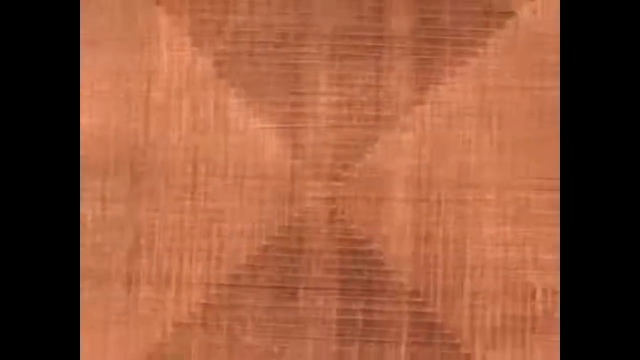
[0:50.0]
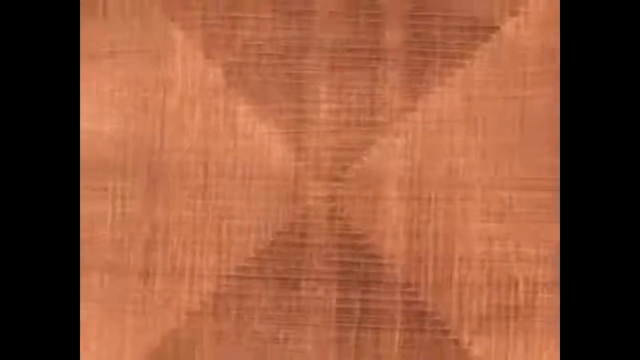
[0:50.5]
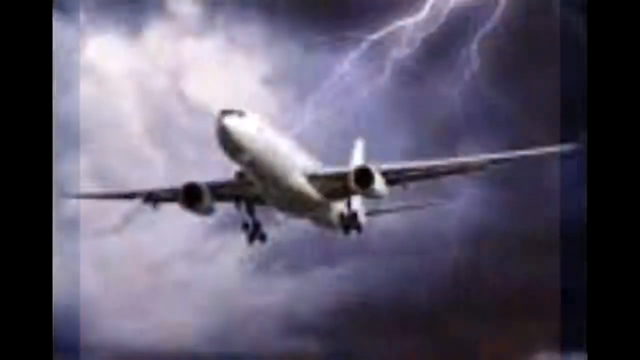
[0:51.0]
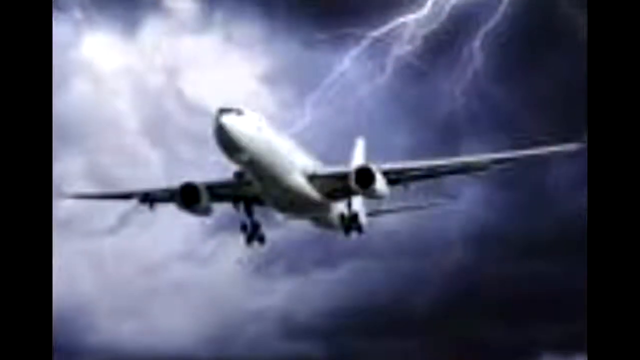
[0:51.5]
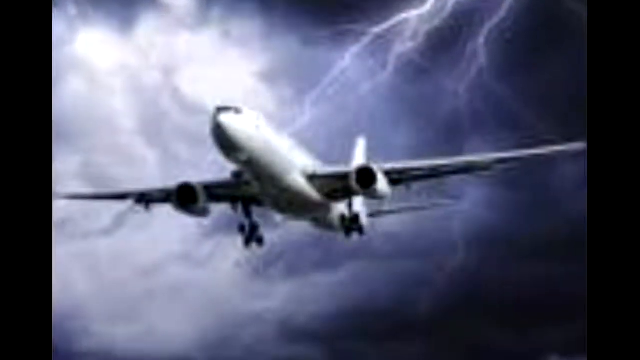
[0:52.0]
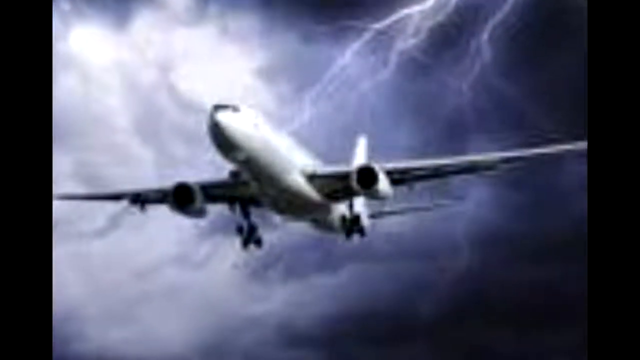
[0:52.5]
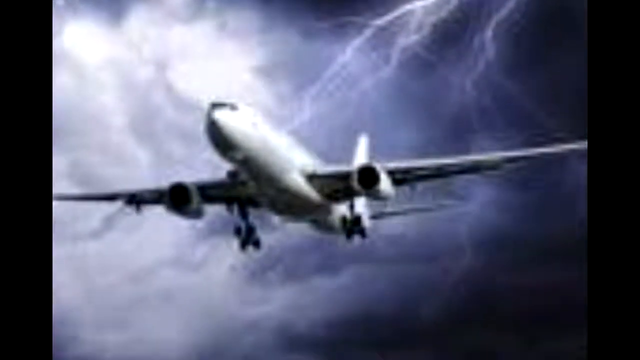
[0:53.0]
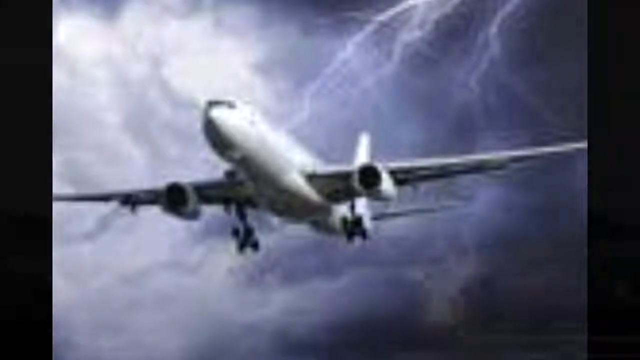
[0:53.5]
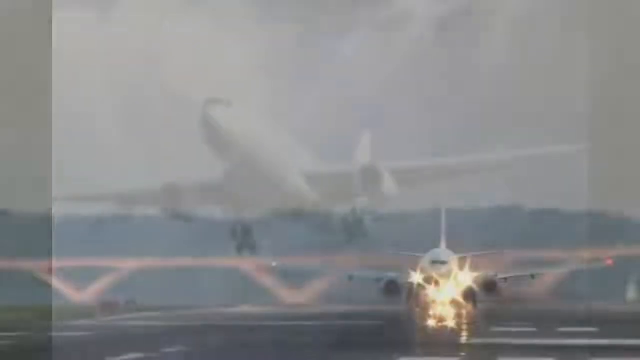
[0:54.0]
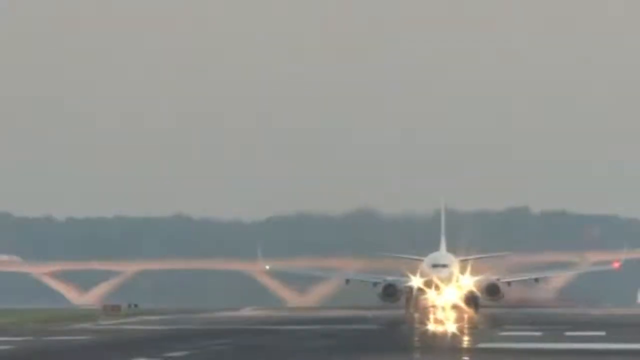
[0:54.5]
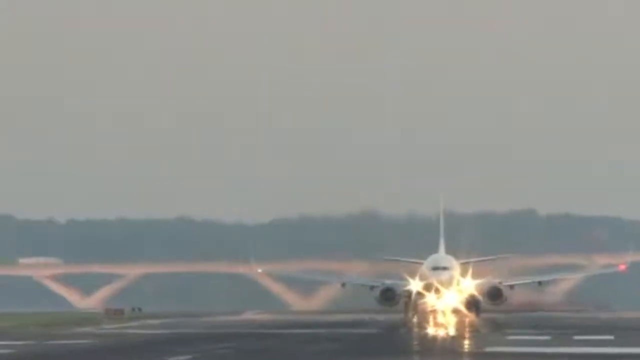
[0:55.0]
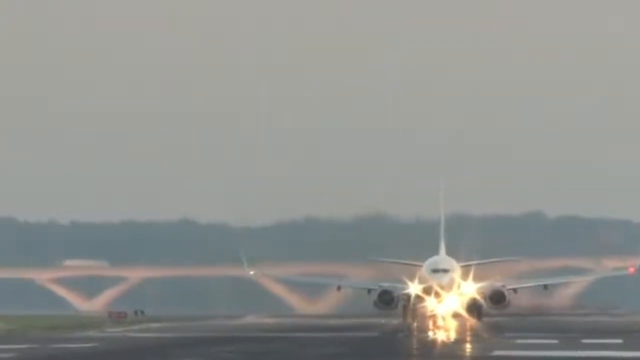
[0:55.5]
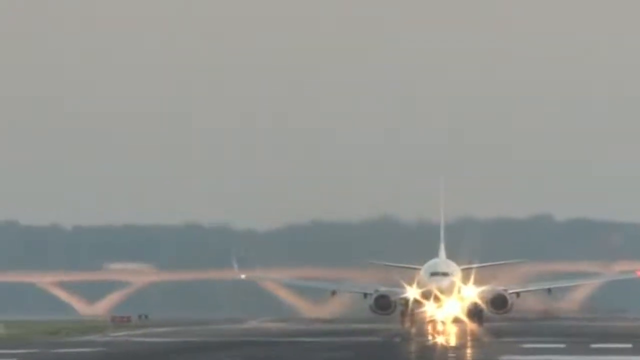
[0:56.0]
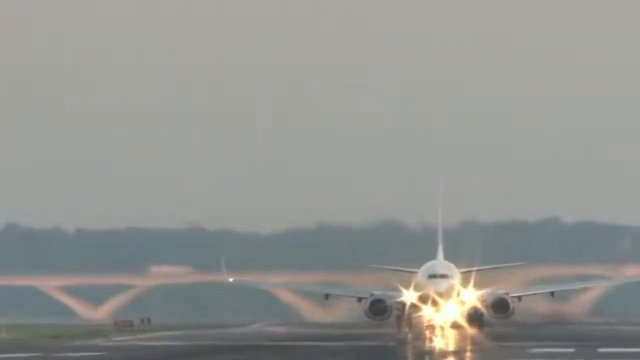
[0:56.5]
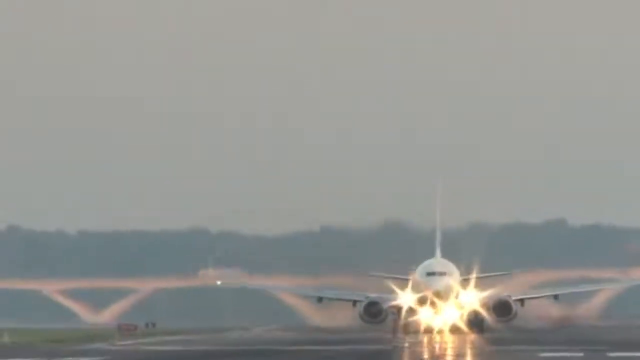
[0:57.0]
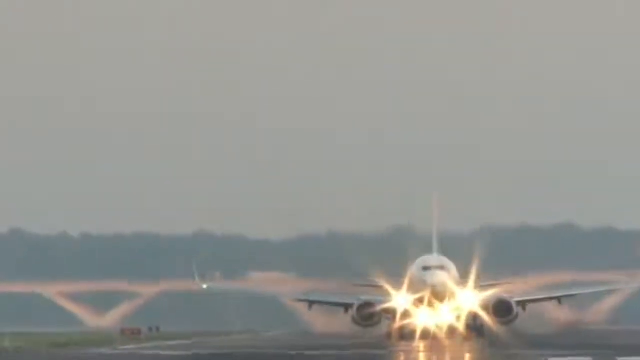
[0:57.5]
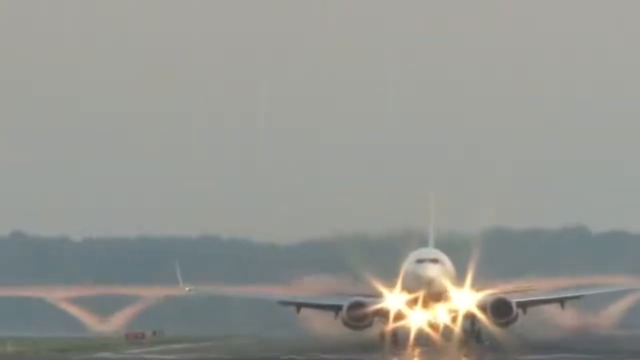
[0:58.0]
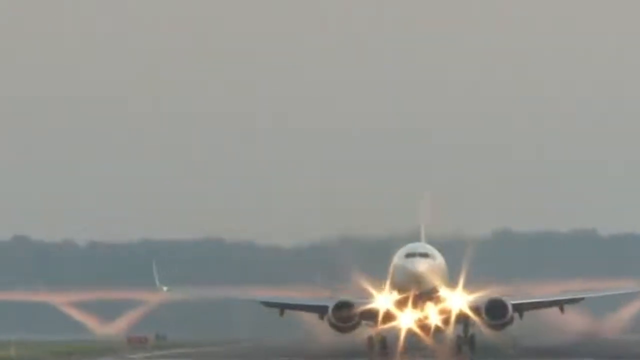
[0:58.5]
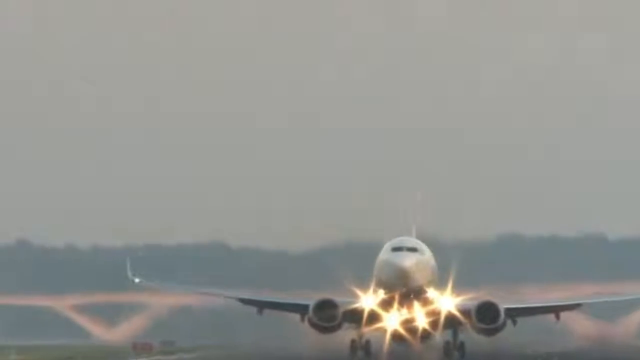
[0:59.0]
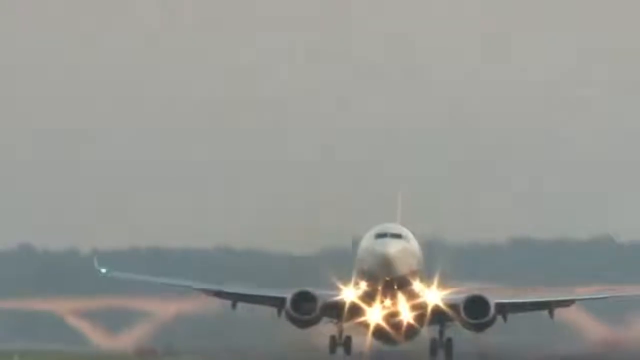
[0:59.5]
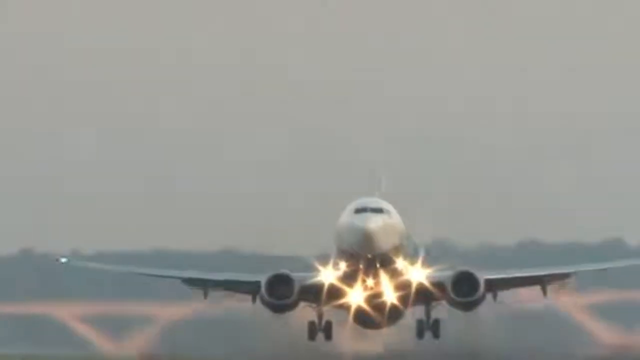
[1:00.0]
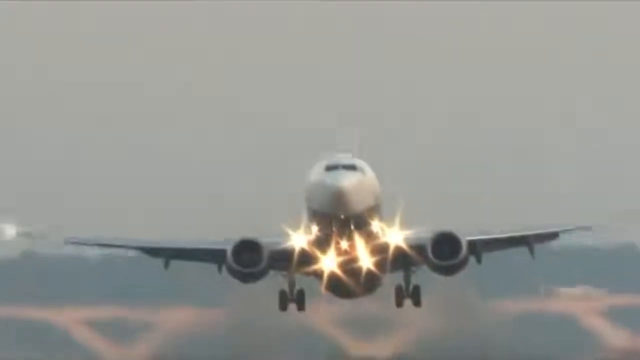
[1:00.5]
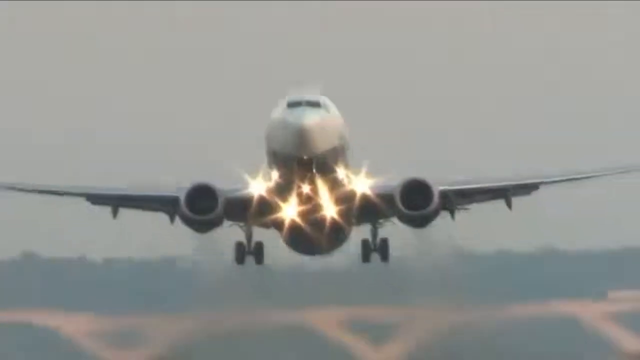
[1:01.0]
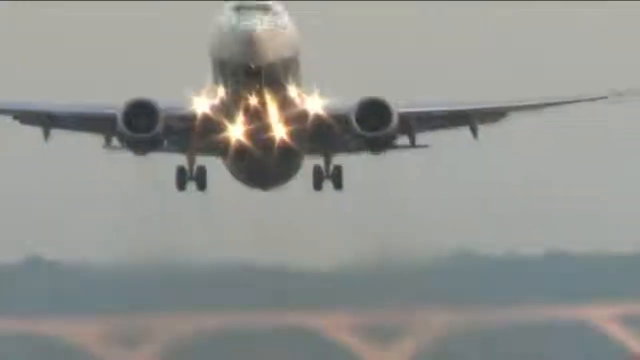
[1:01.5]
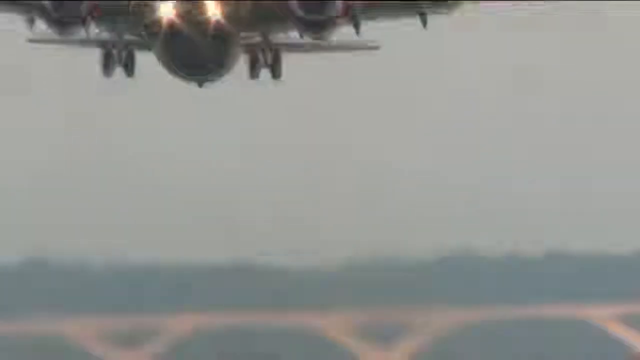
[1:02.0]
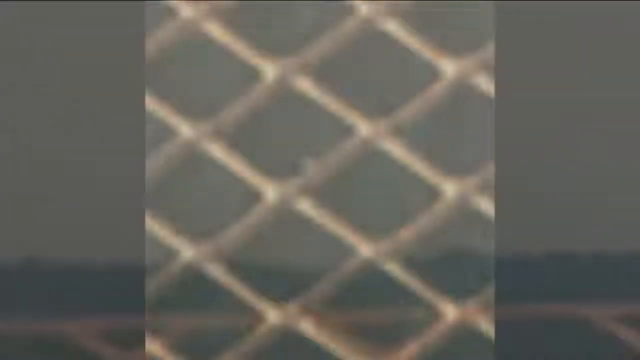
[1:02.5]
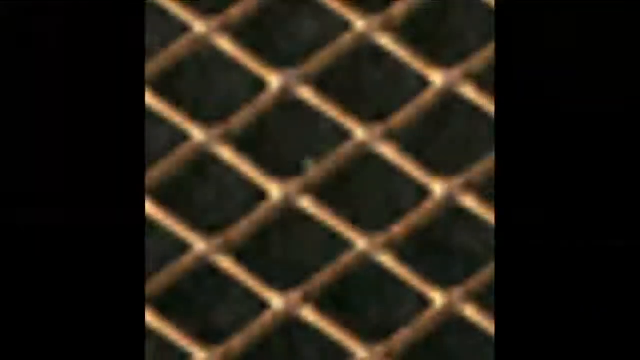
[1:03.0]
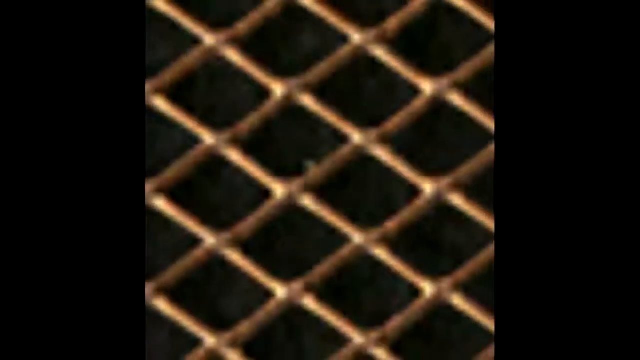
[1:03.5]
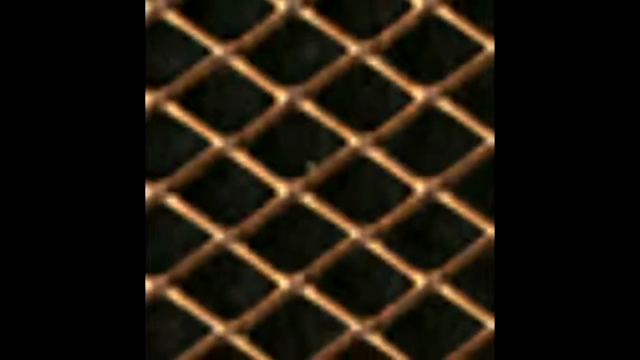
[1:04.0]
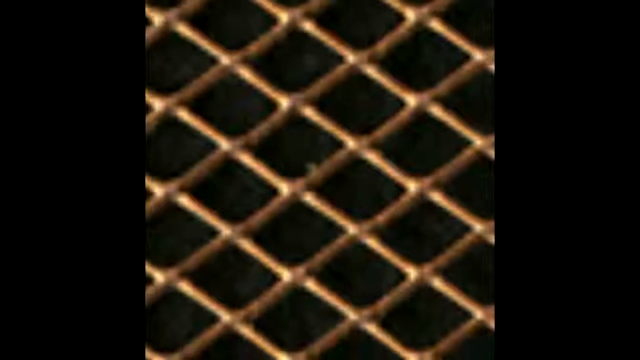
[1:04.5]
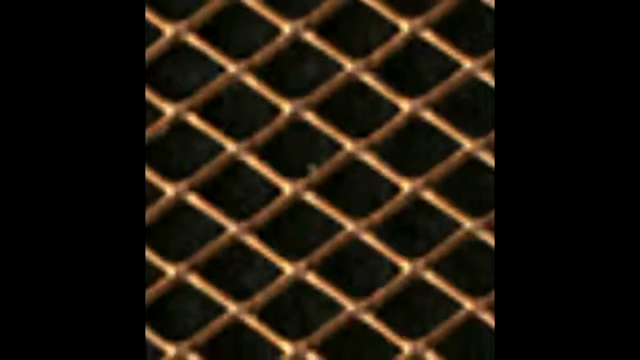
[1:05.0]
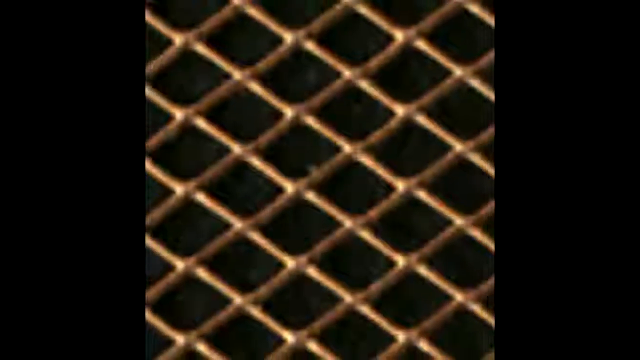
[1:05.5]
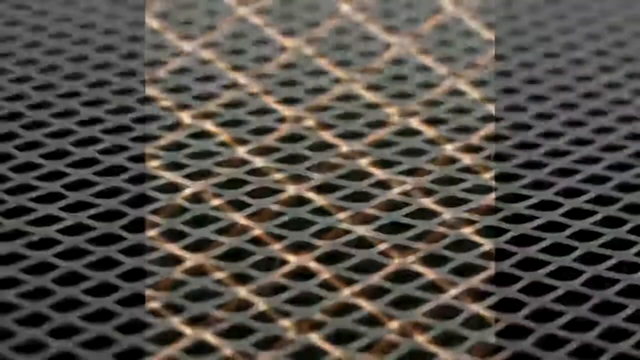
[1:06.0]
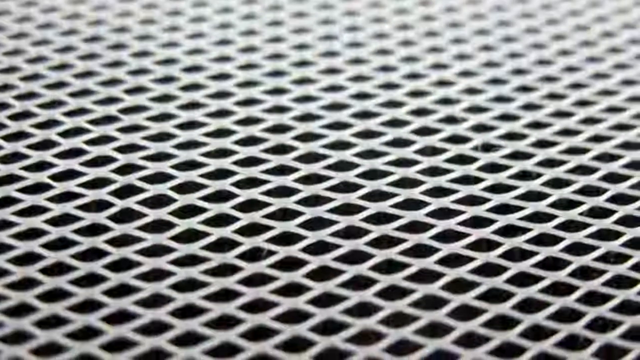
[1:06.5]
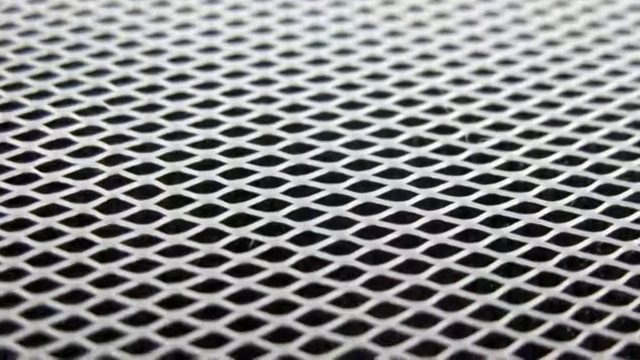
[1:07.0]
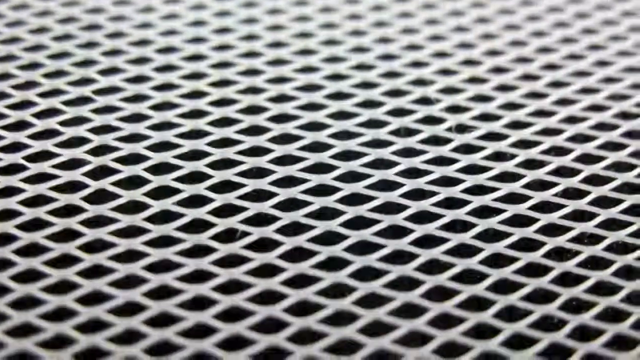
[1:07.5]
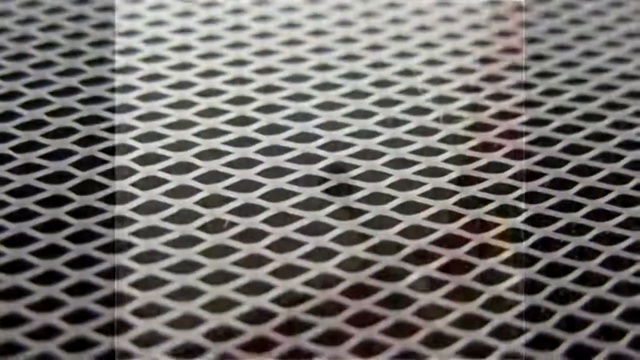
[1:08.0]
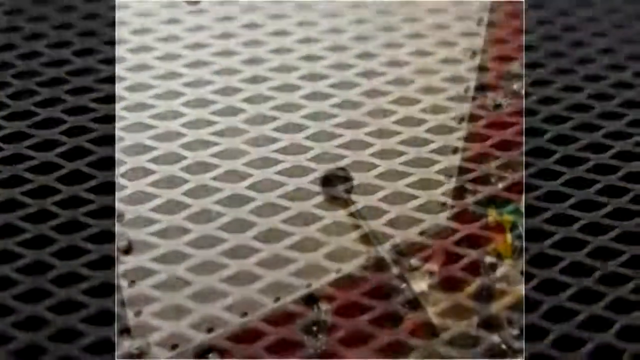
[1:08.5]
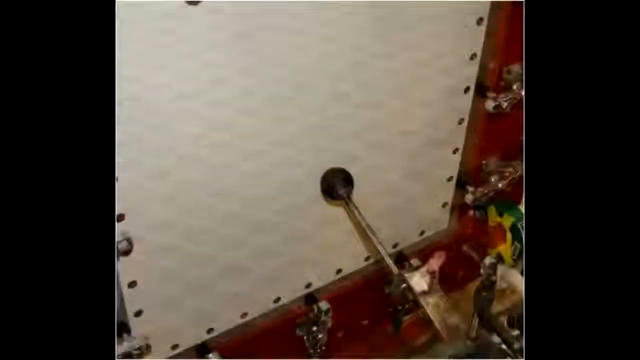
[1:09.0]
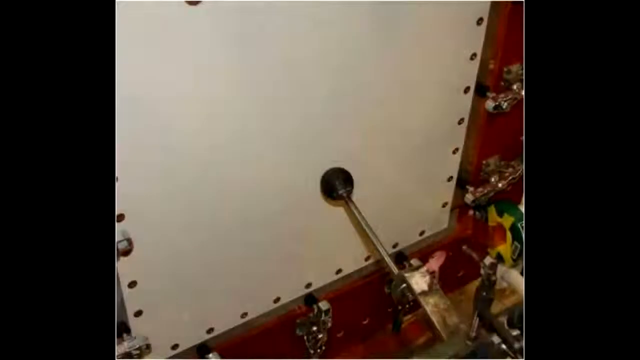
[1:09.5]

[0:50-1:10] Images show planes and rockets landing and taking off. Images also show what is apparently part of the metal or equipment used, a material that looks like something that can take a lot of heat and appears almost brass-like or copper-like. Copper coils are shown right before the video returns to this material, and the video keeps referring back to planes at takeoff.